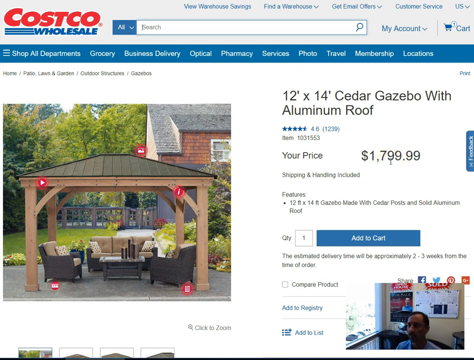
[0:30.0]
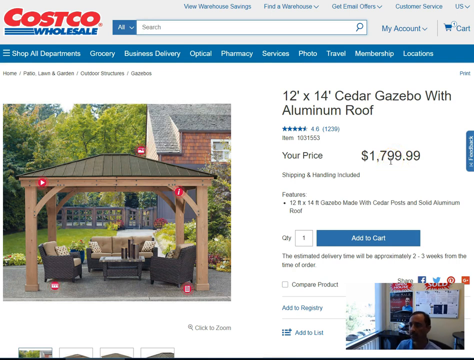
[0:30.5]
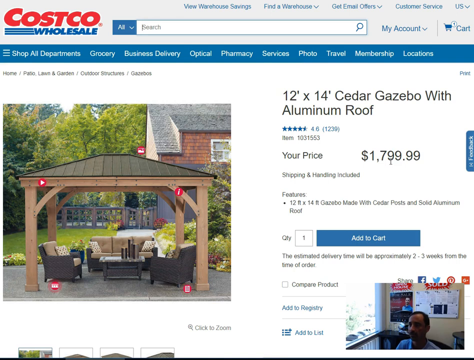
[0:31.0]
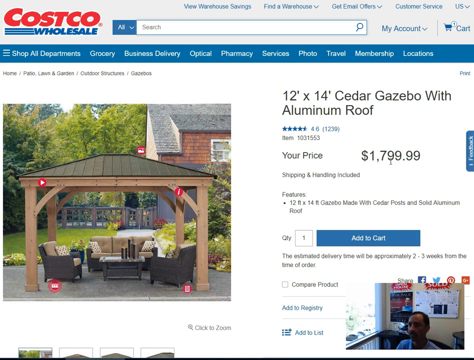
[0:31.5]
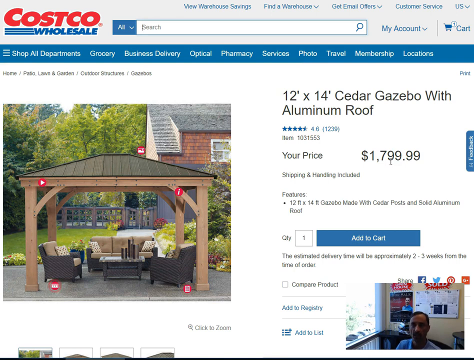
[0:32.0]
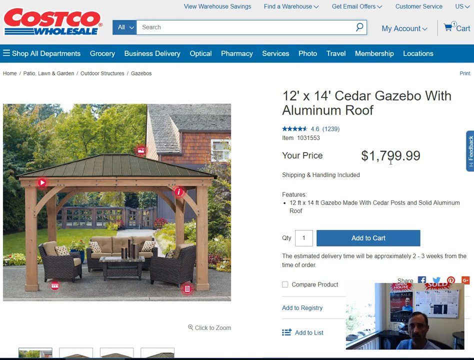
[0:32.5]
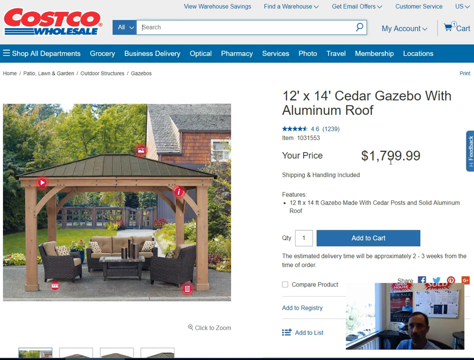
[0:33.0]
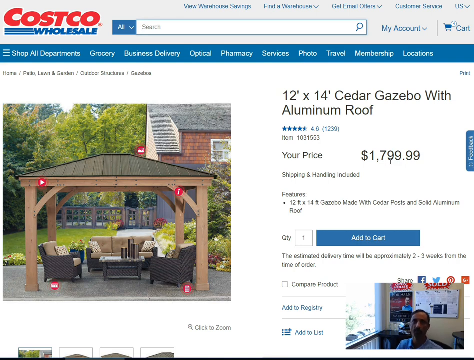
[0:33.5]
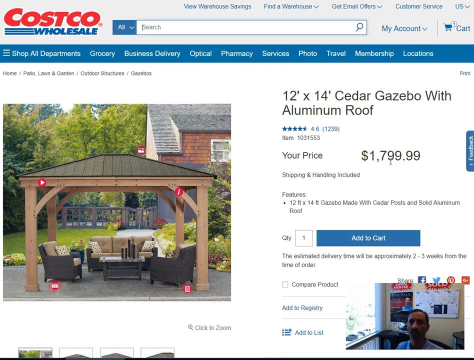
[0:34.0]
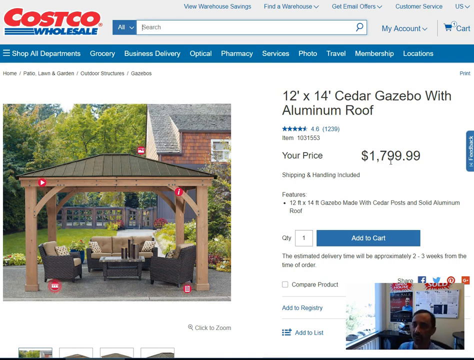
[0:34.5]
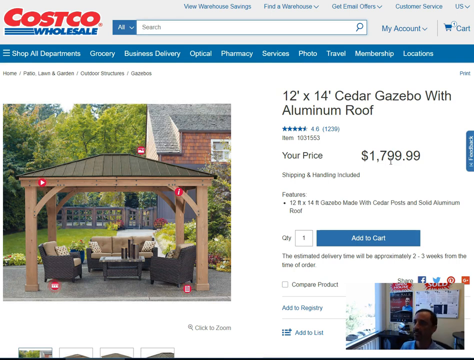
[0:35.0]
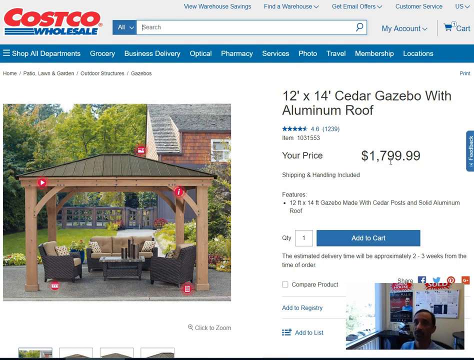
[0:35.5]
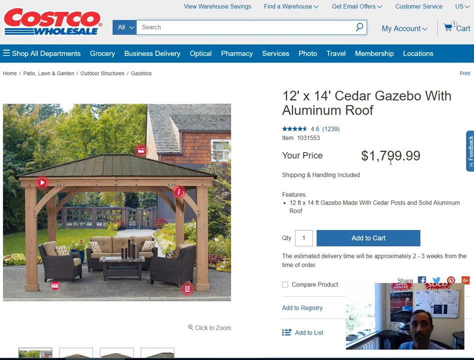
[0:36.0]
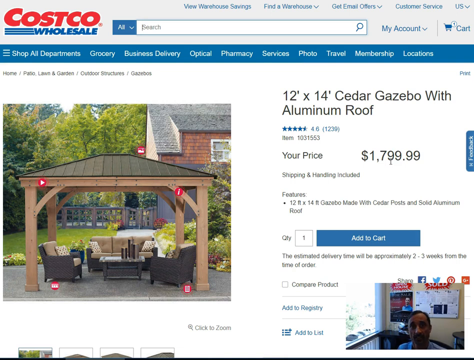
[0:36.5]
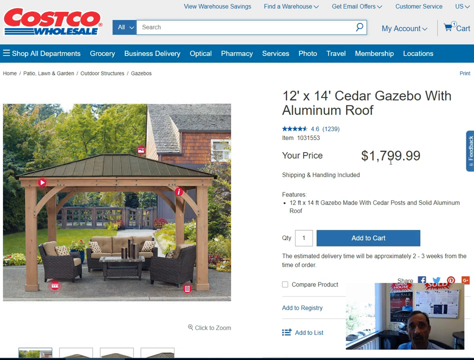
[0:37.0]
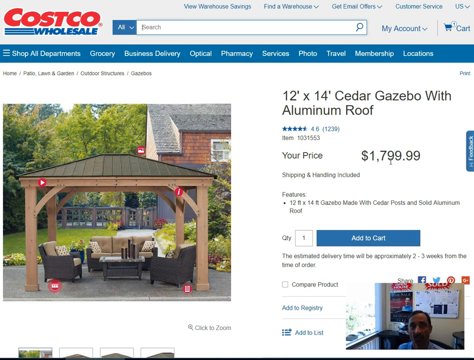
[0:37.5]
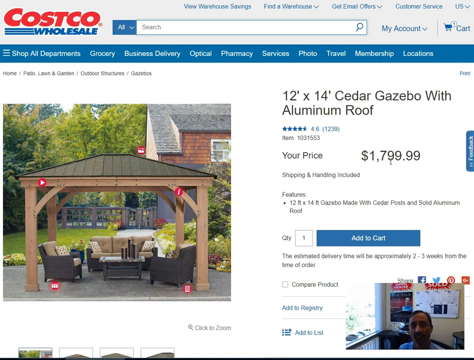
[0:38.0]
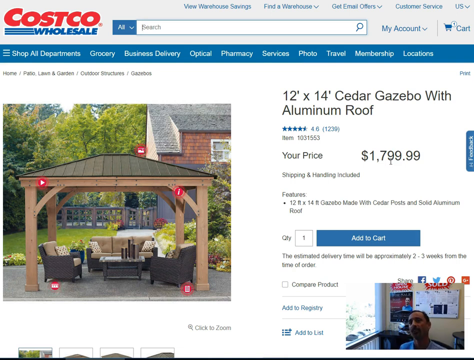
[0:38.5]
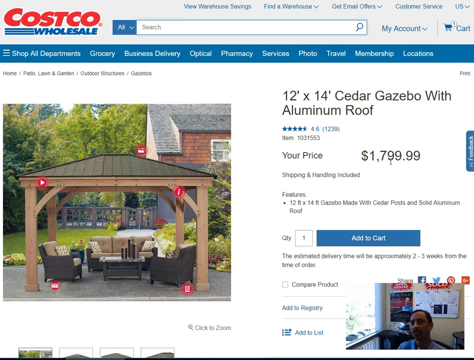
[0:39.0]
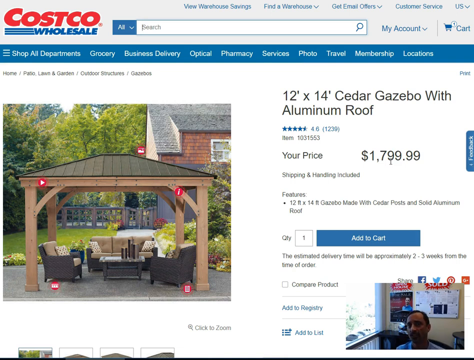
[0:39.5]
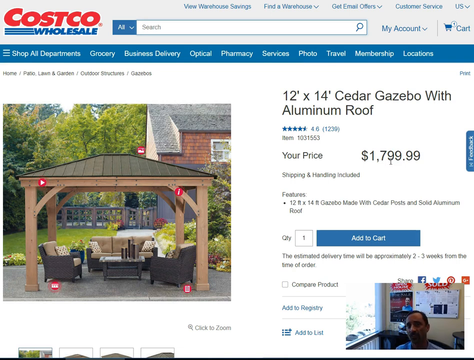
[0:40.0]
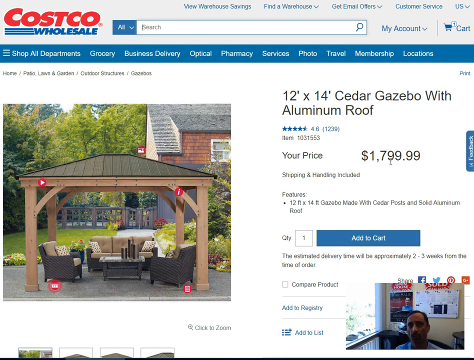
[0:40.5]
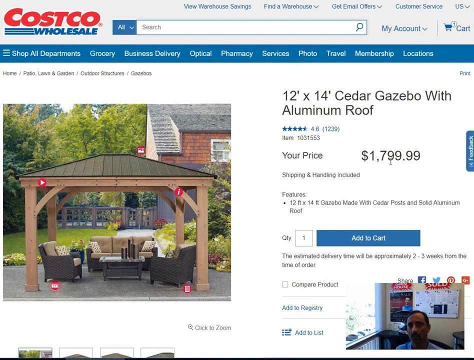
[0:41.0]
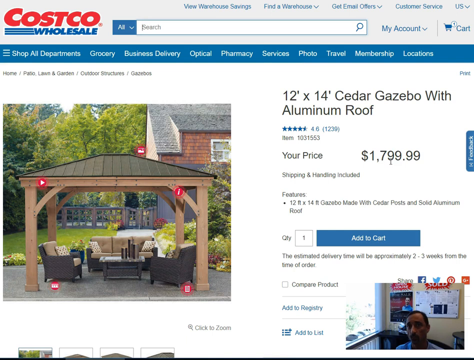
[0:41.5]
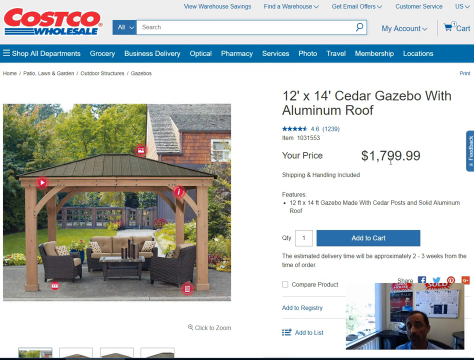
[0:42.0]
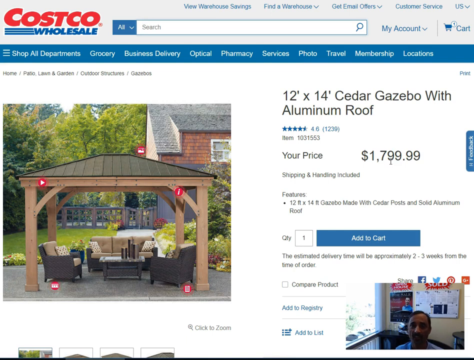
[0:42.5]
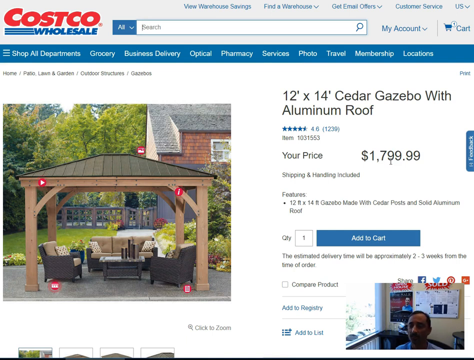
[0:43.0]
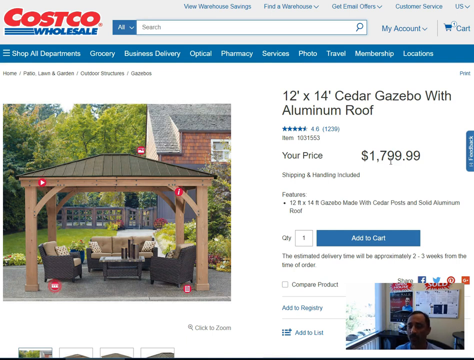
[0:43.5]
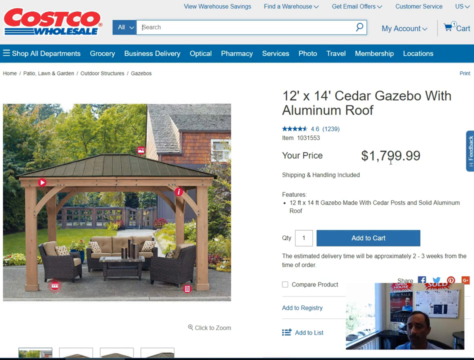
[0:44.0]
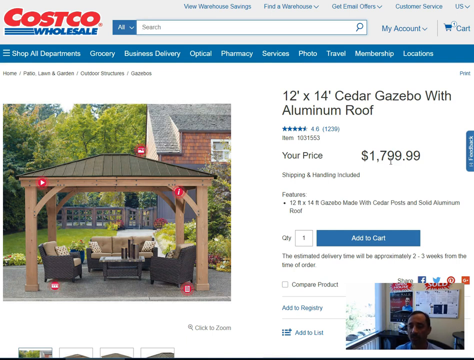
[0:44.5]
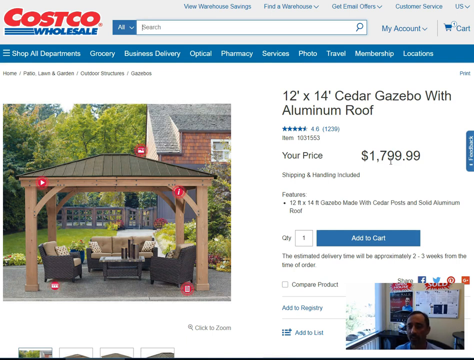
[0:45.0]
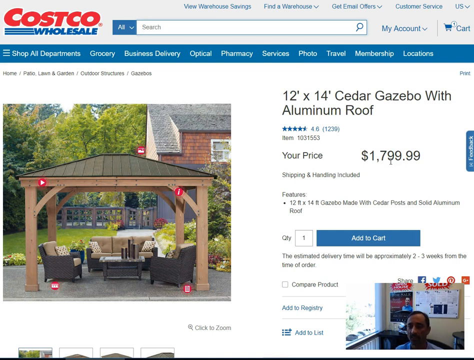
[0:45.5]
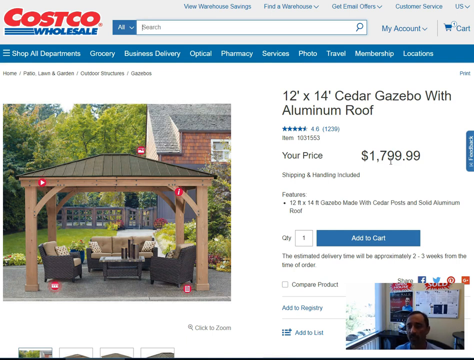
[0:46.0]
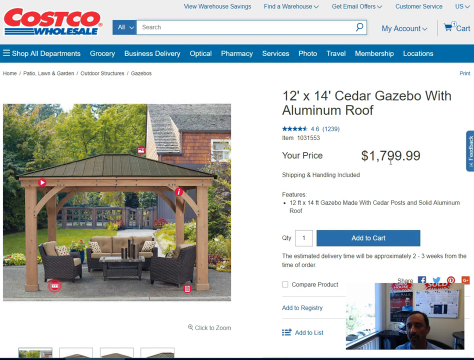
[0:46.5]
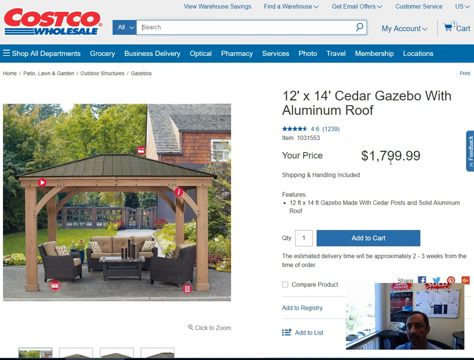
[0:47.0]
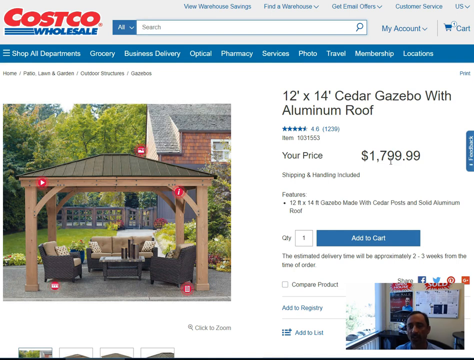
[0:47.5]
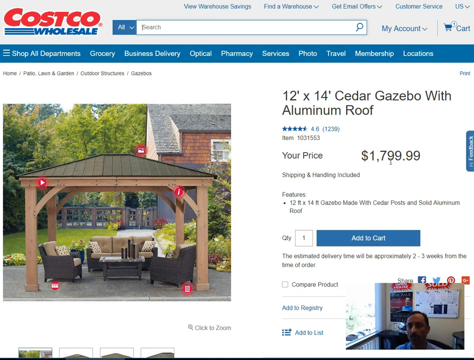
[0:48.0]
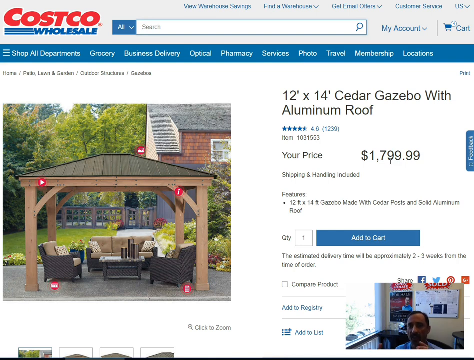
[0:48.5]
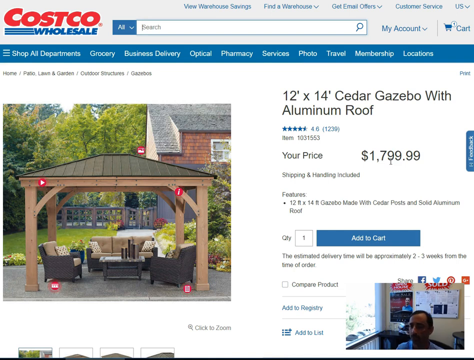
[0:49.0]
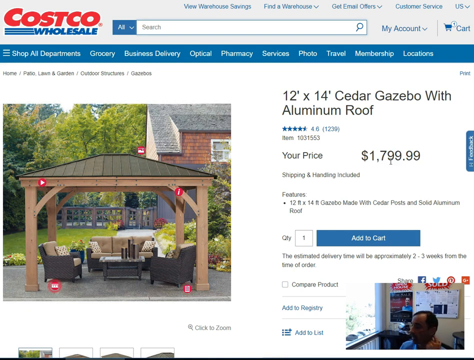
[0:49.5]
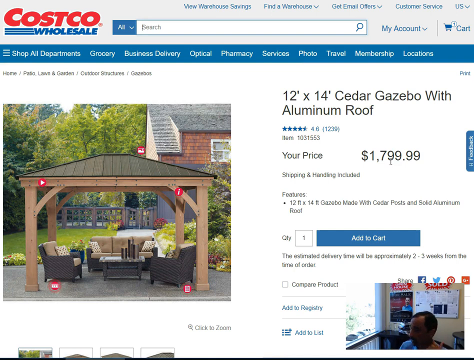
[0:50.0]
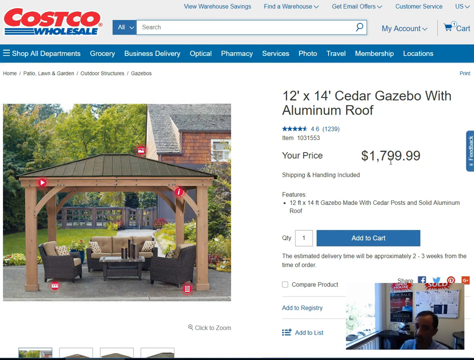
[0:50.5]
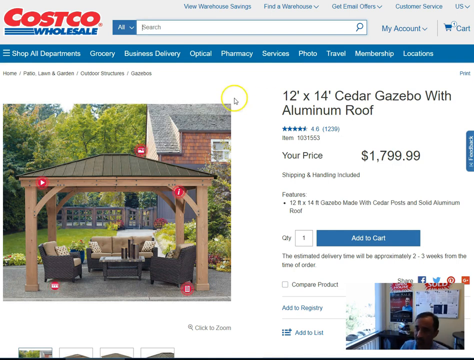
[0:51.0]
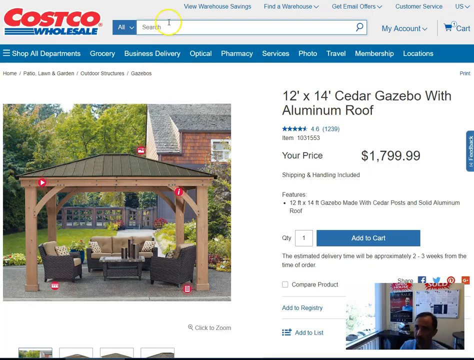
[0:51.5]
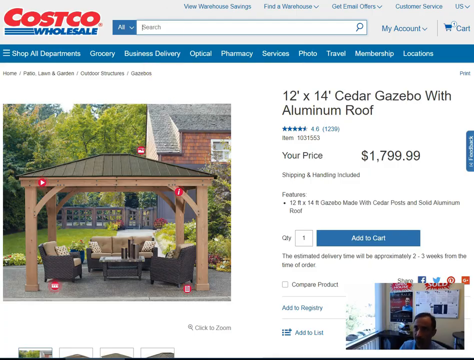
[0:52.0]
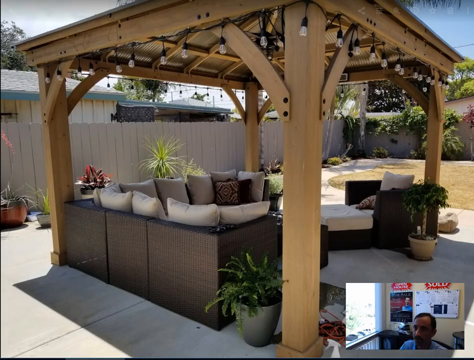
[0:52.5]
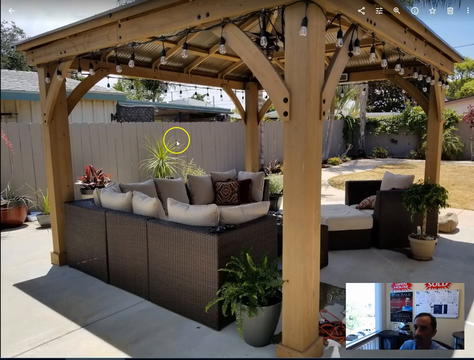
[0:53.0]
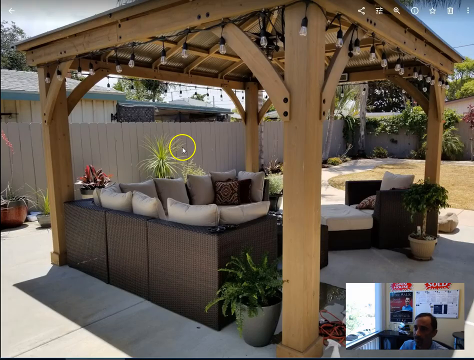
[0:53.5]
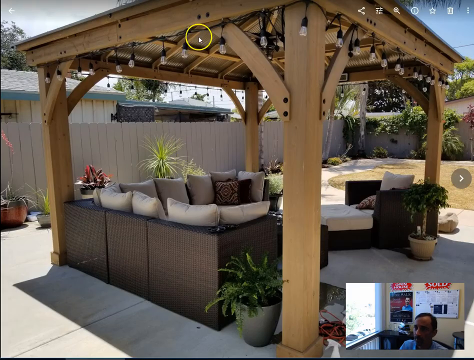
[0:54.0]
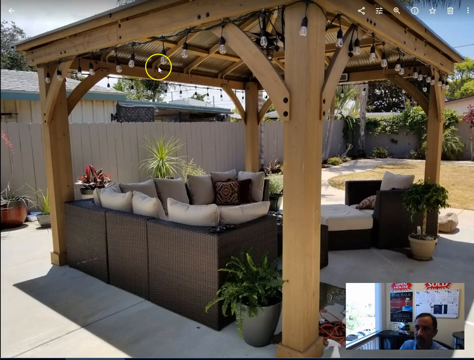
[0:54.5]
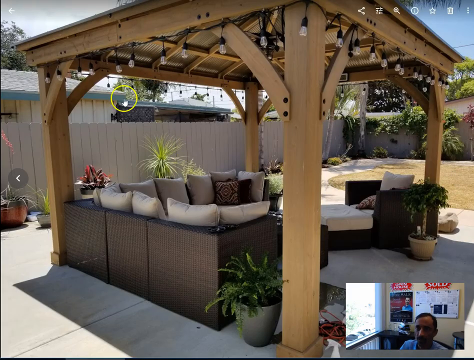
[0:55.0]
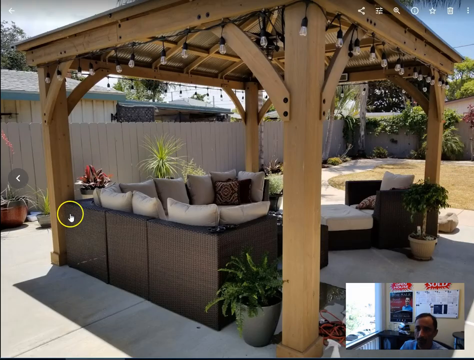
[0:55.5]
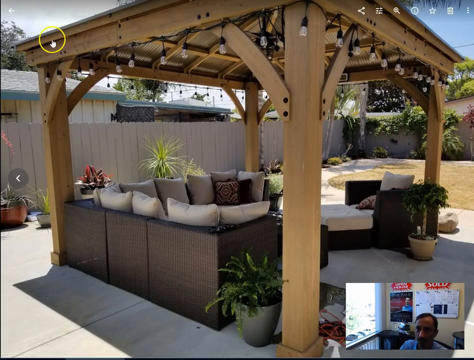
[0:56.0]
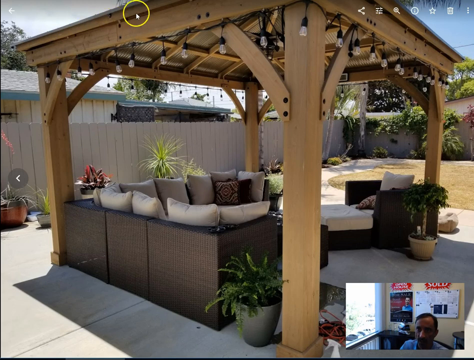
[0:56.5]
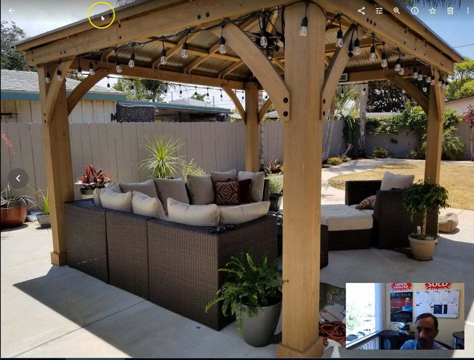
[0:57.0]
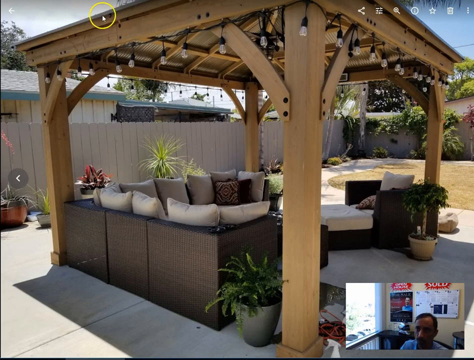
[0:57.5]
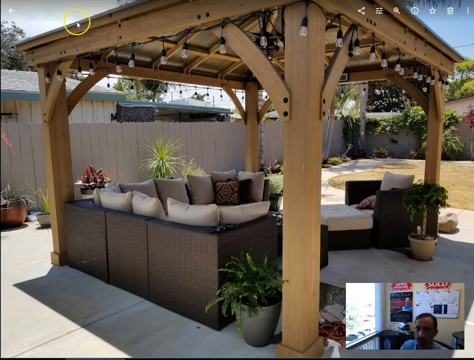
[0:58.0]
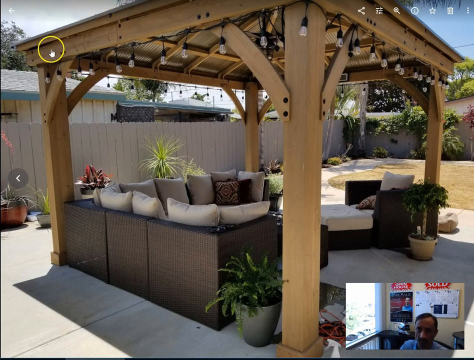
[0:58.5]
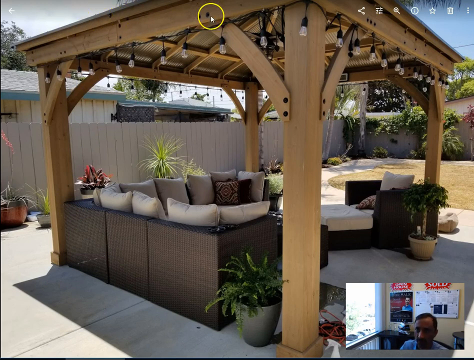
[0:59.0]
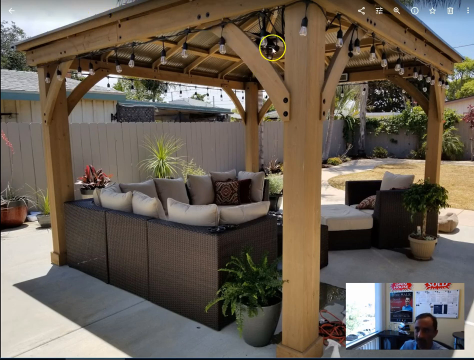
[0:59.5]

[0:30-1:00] On a Costco website, a picture of a gazebo is on the left side and the gazebo's specifications are on the right. At the top left, black text says "12 by 14 foot cedar gazebo with aluminum roof." Underneath is the price, "$1,799.99," and below that is a blue button with white text that says "head to cart." In the lower right of the screen is a picture-in-picture video of a person who seems to be talking about the website; they use the cursor and seem to highlight the search bar. The image then seems to be enlarged, showing that the gazebo is made of brown wood. Inside the gazebo are what look like outdoor sofas; the frames of the chairs and sofa look brown, and the backrest looks light tan, almost gray.